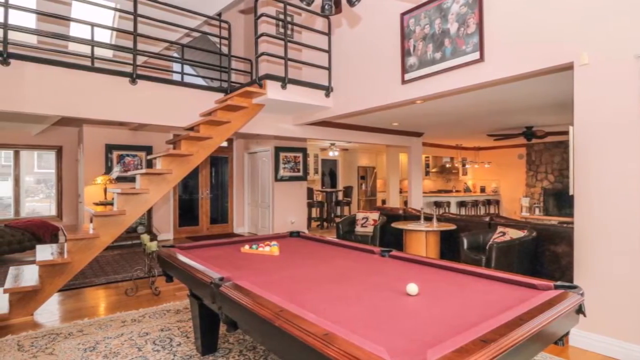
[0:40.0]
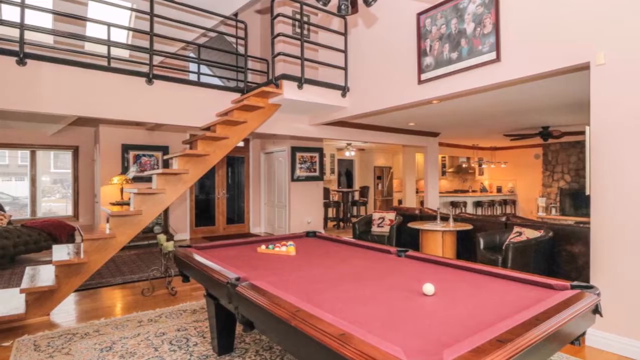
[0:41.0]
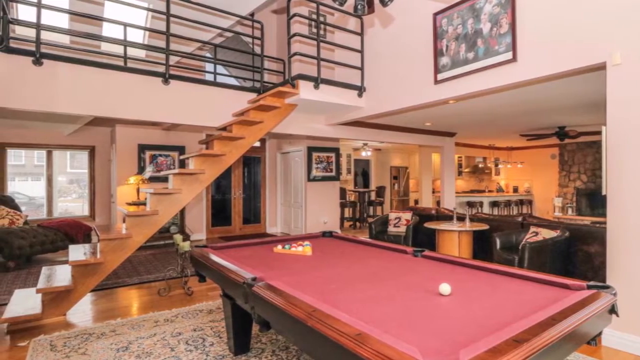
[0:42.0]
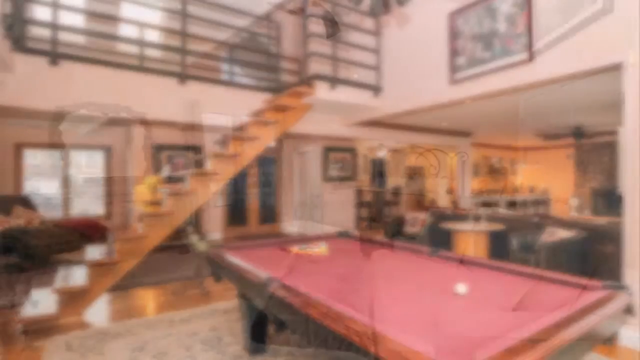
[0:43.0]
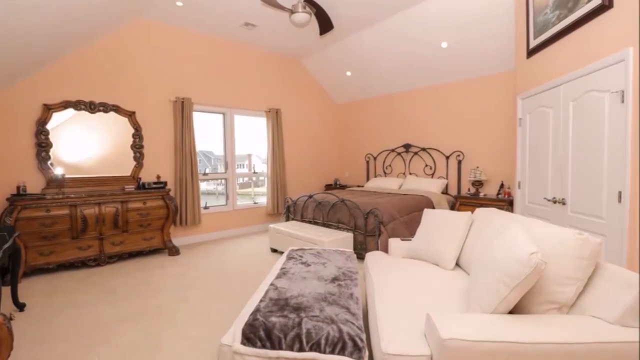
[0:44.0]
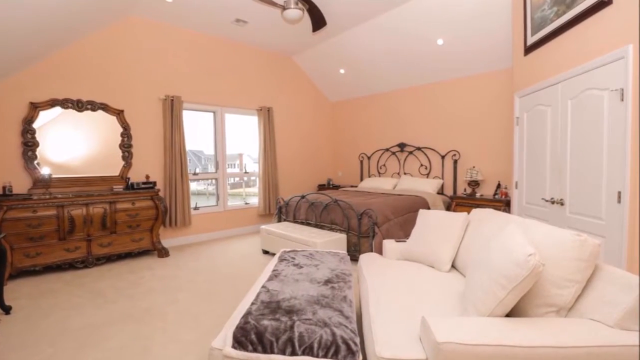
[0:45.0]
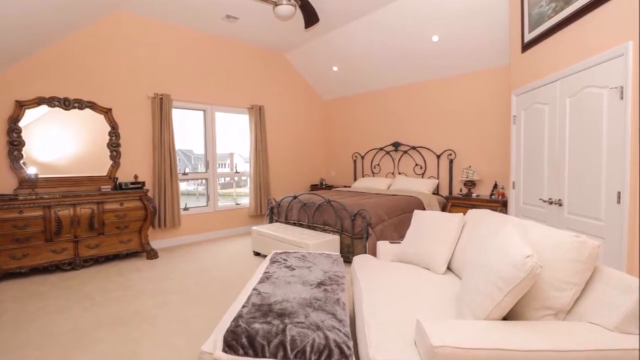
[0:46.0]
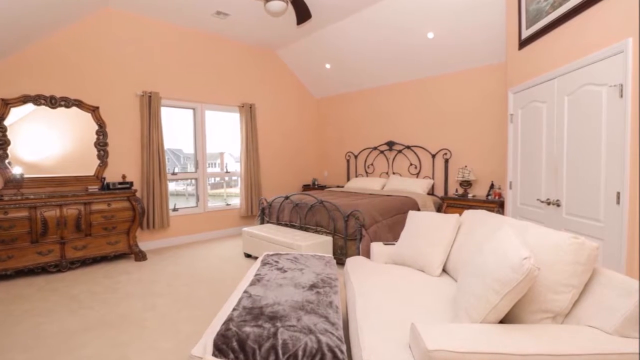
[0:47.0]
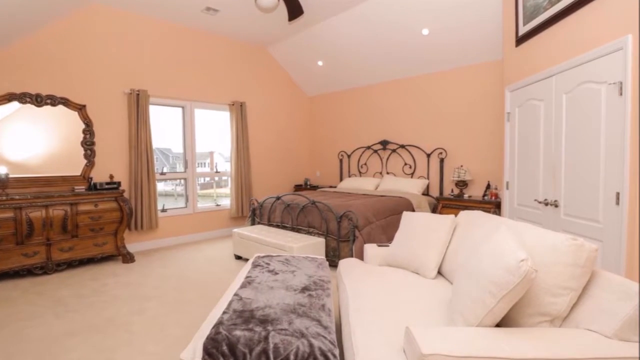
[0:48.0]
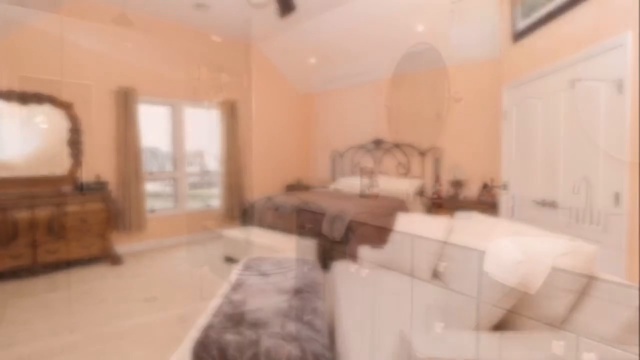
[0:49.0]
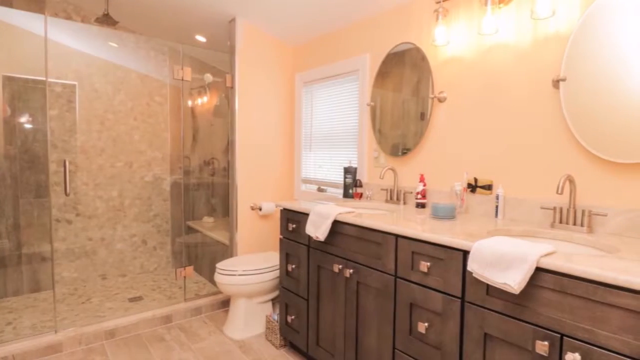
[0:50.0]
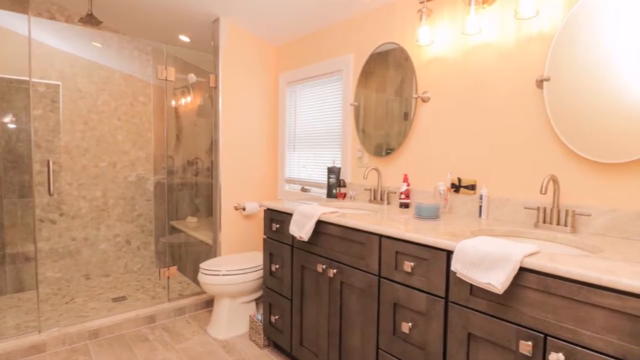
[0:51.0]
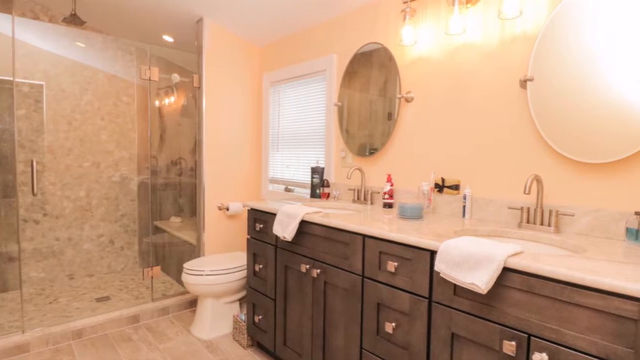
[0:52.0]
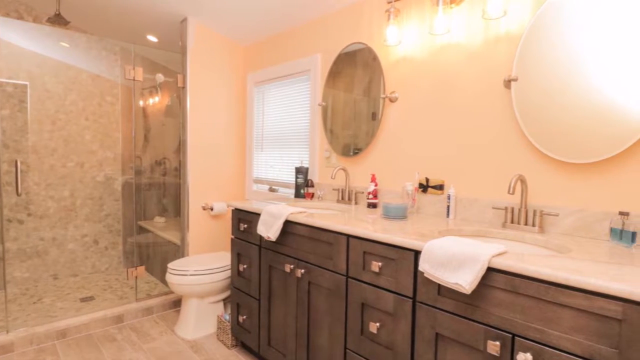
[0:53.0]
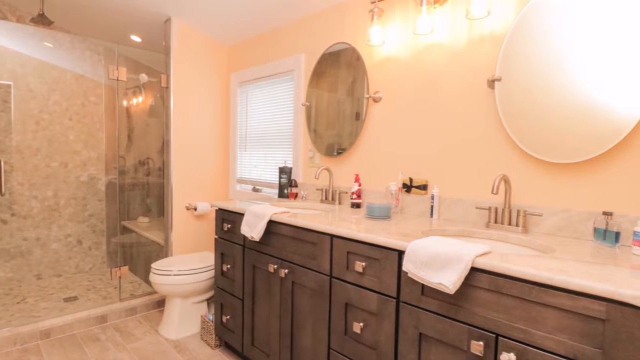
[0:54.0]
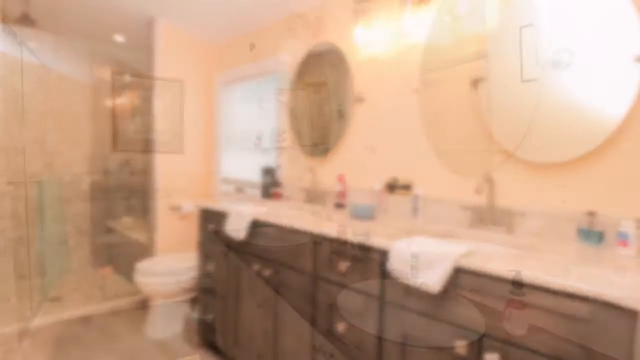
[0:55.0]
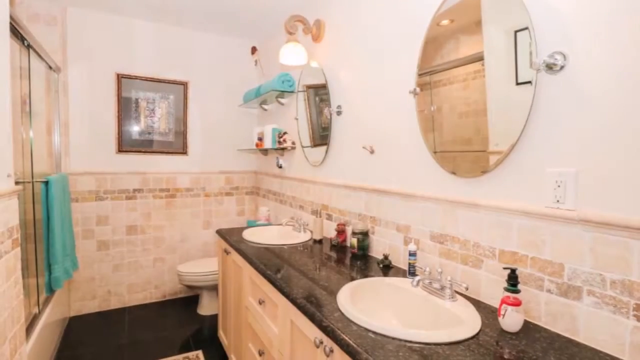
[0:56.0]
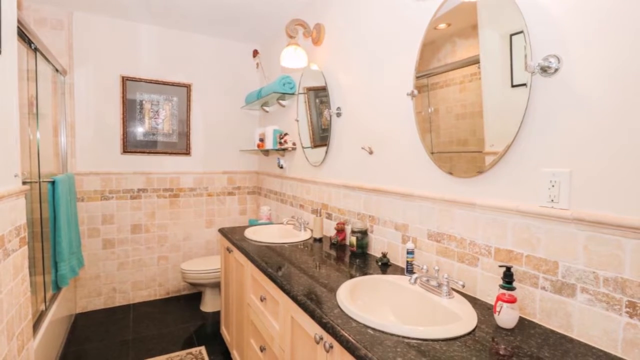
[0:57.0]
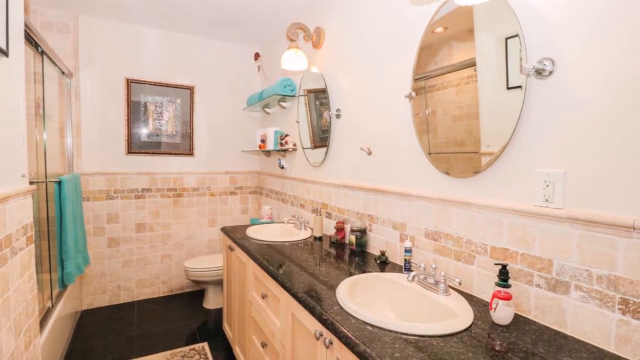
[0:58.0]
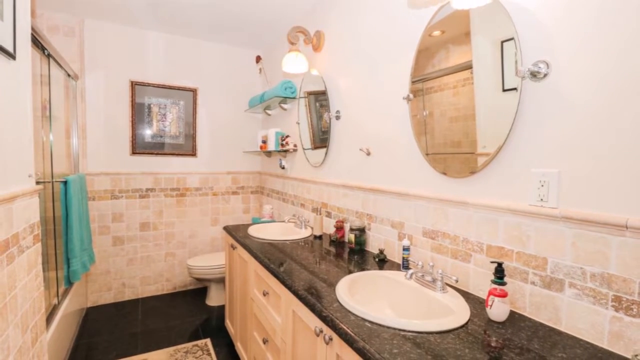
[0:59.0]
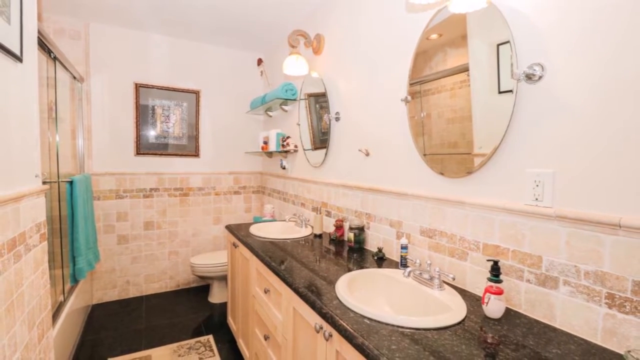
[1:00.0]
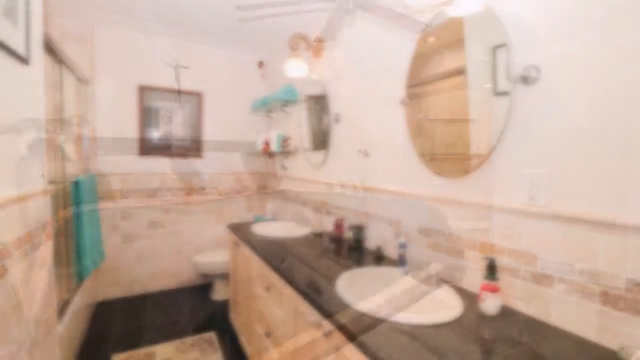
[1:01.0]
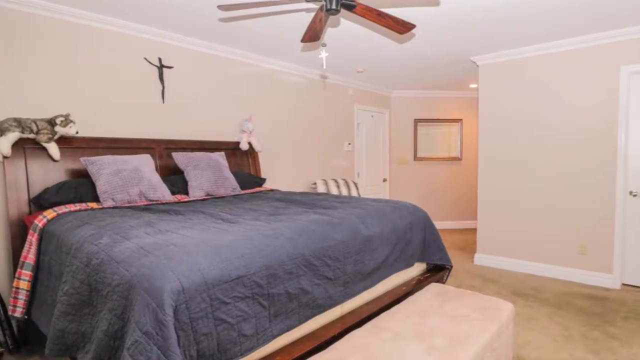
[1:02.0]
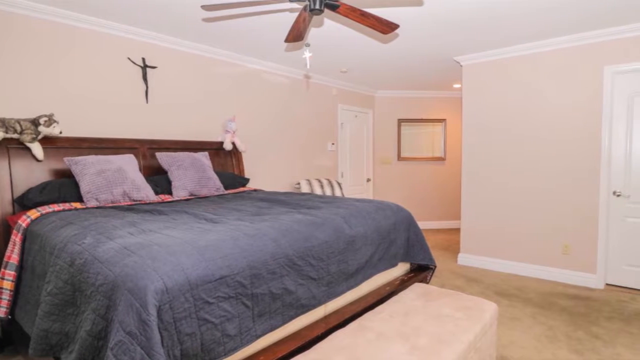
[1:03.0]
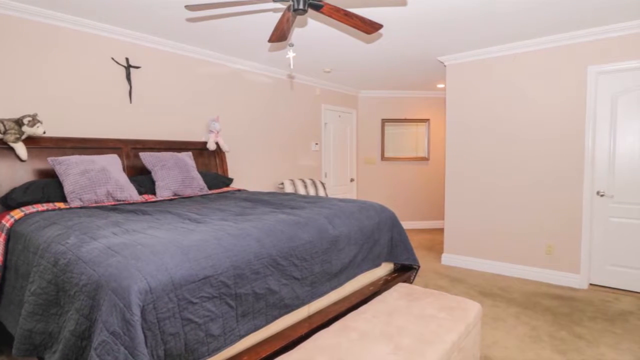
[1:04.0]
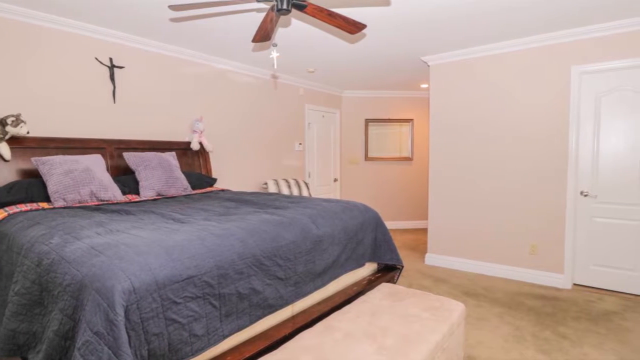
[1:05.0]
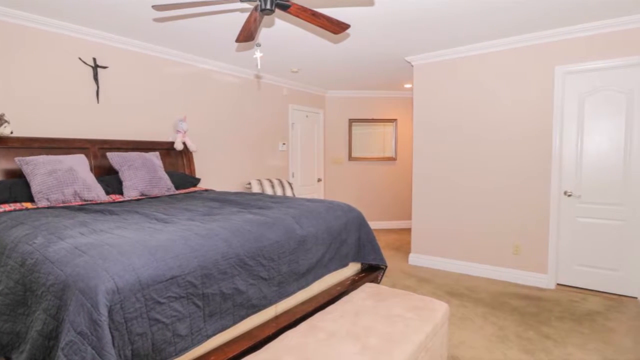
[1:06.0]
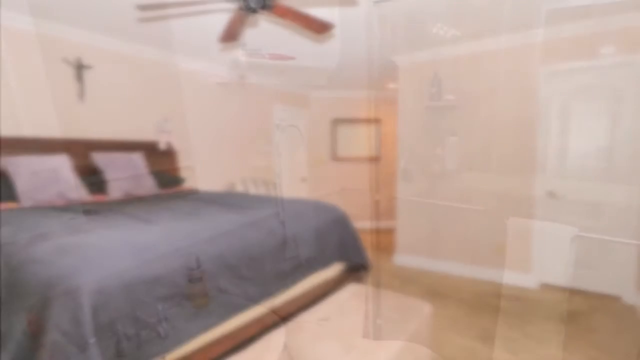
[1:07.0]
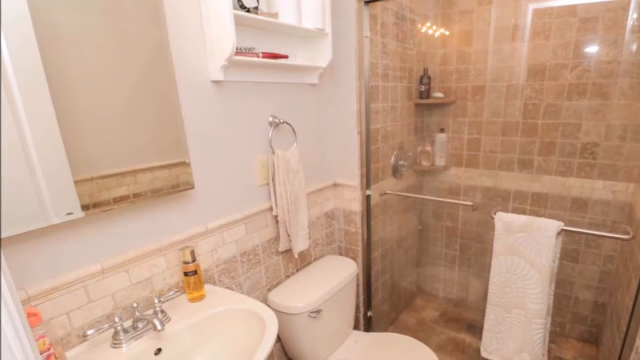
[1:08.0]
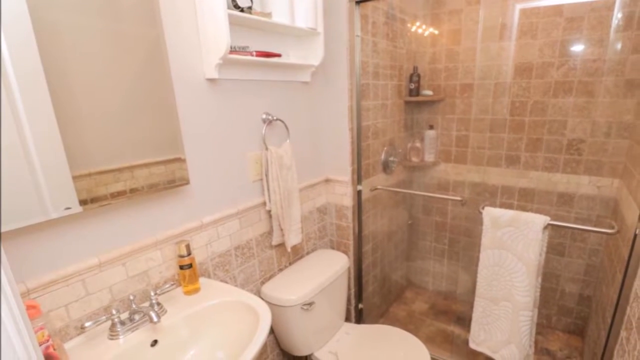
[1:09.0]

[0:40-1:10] The tour of the house continues, showing a bar in the distance where the snooker table was. Next is what appears to be the master bedroom, which has a big bed, a sofa in front of two double doors, a vanity table with a lot of antique carvings, and quite a large window through which other houses near the property can be seen; it is very luxurious. A luxurious bathroom has a big walk-in shower, two sinks with two mirrors, and a toilet. The soap dispensers are festive themed, like snowmen, suggesting it may have been set around Christmas time. Another bedroom has a wooden bed with a dark duvet cover and a soft toy on either end, and a ceiling fan. Another bathroom, less extravagant than the first, has a walk-in shower and just one sink.